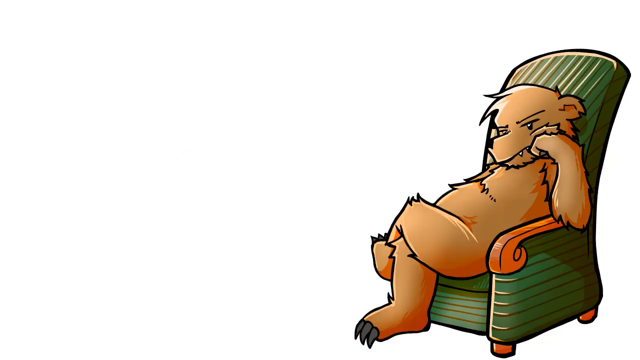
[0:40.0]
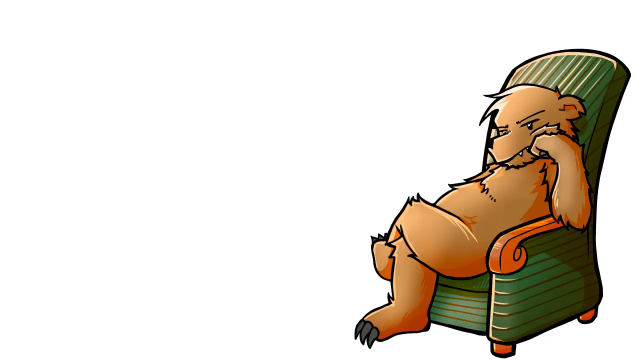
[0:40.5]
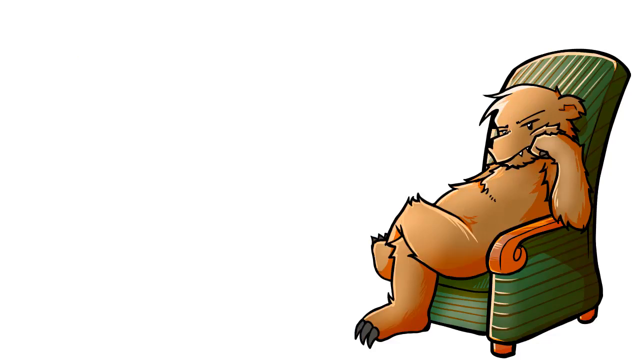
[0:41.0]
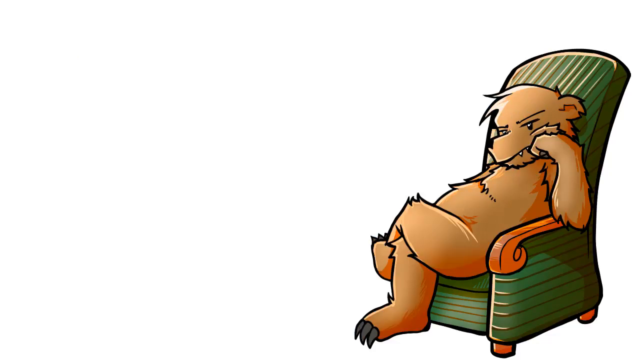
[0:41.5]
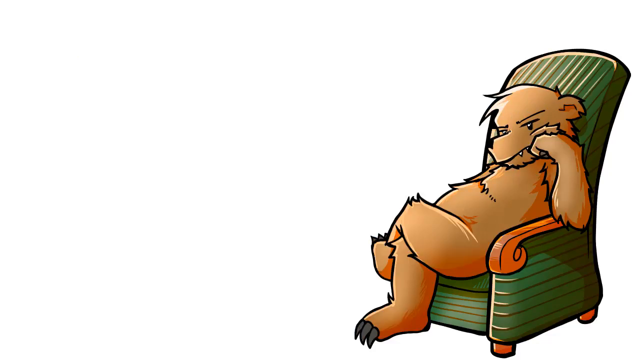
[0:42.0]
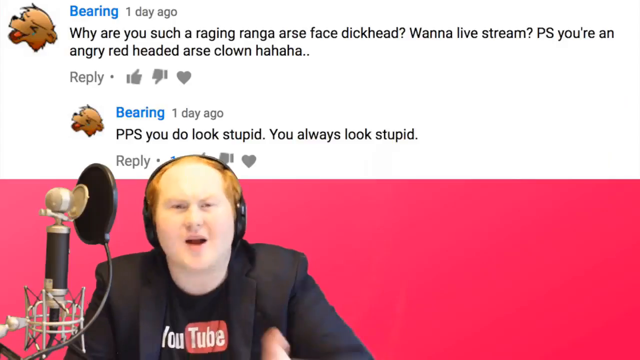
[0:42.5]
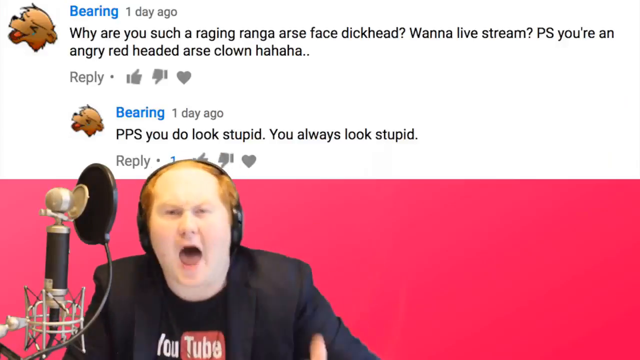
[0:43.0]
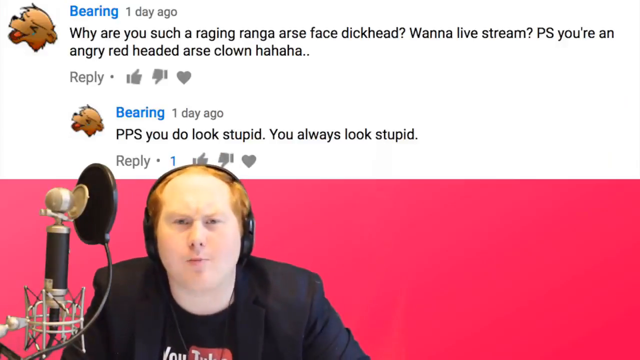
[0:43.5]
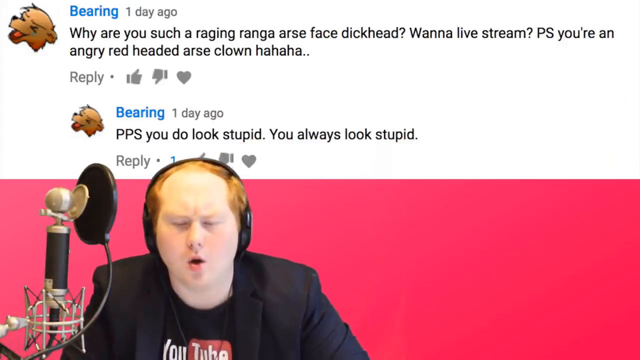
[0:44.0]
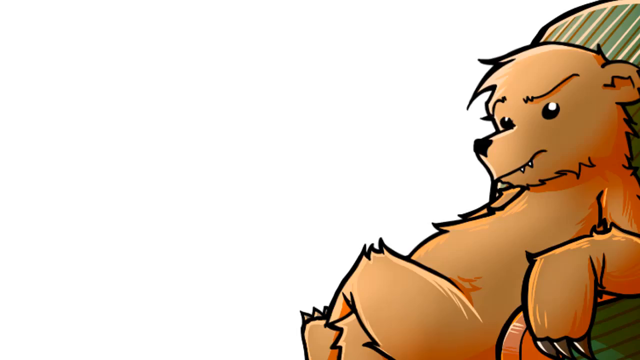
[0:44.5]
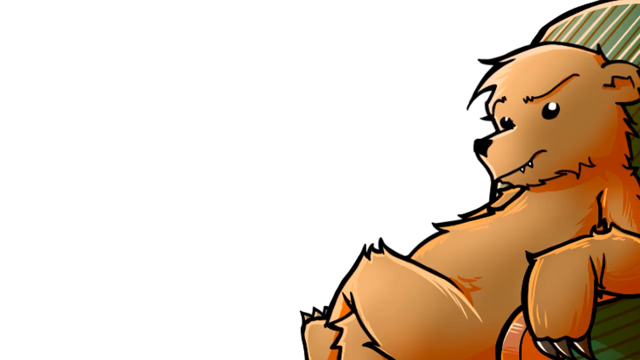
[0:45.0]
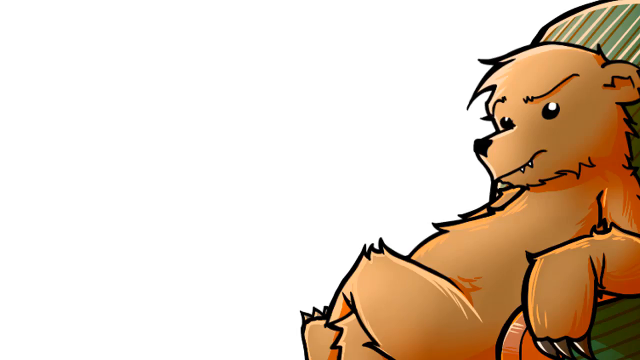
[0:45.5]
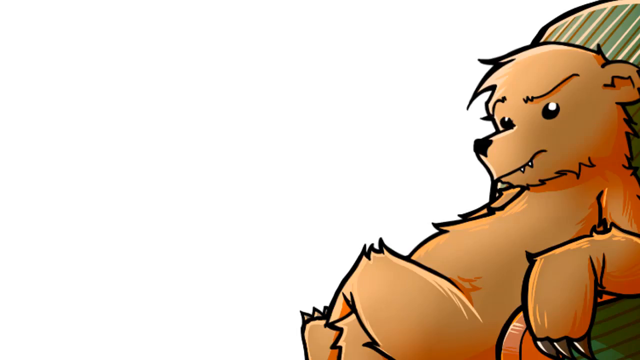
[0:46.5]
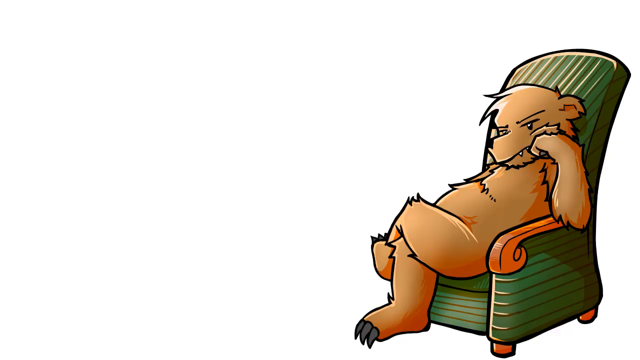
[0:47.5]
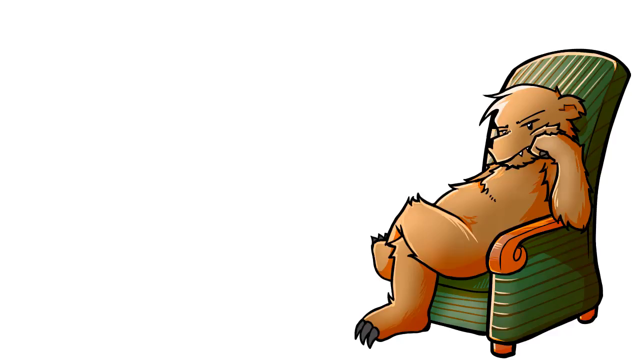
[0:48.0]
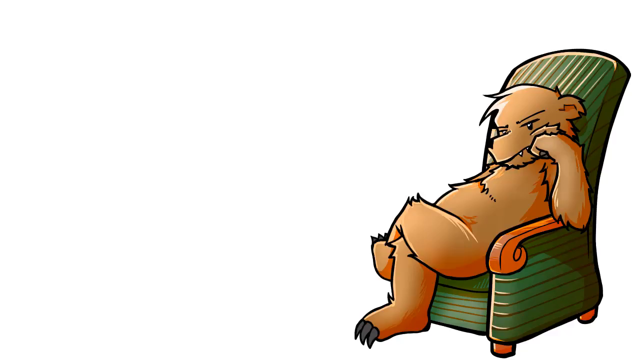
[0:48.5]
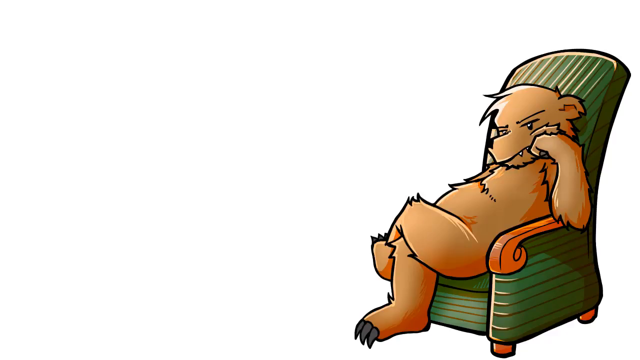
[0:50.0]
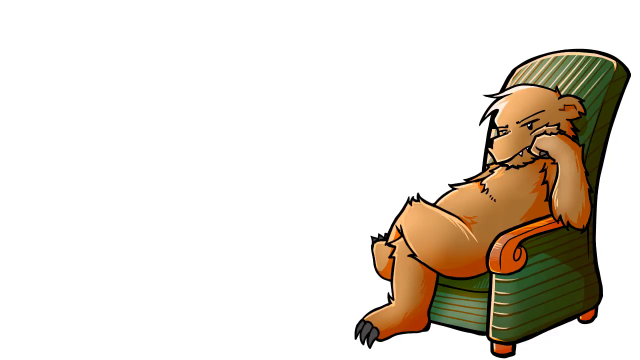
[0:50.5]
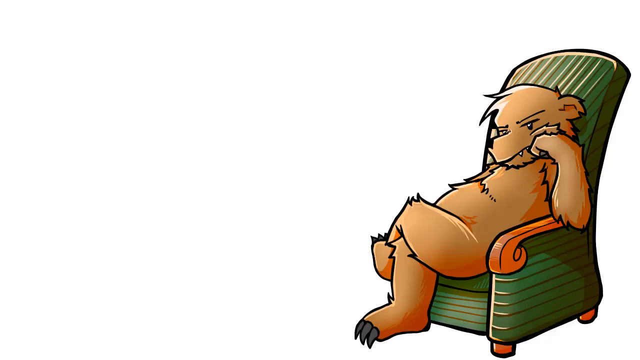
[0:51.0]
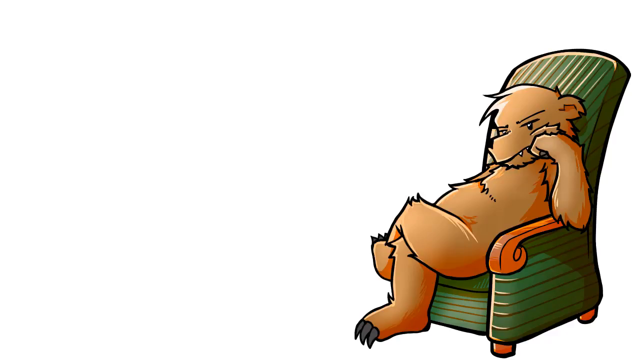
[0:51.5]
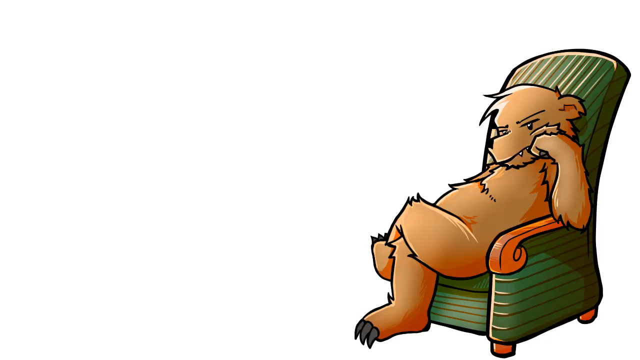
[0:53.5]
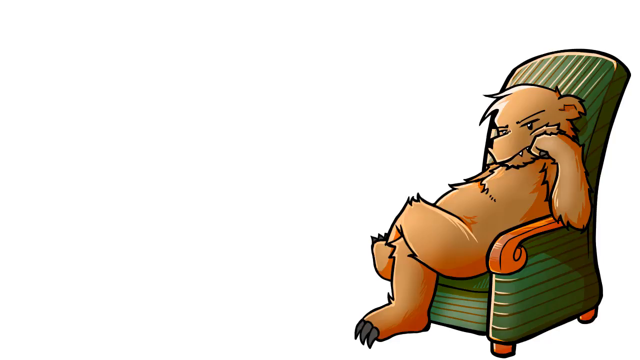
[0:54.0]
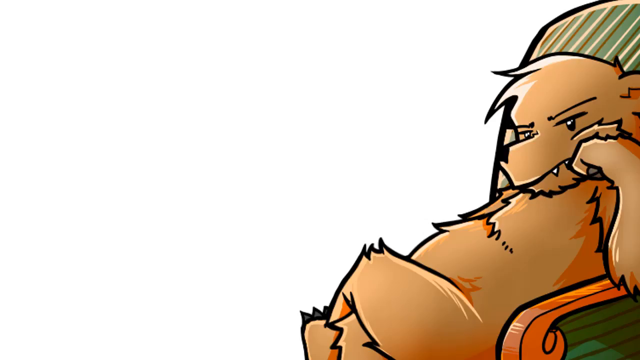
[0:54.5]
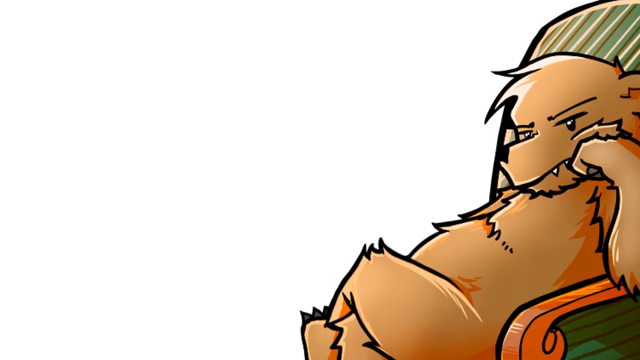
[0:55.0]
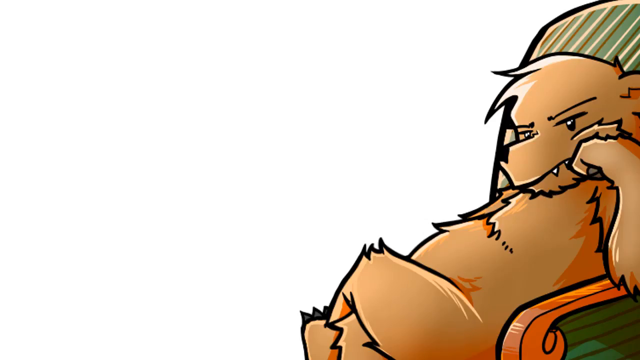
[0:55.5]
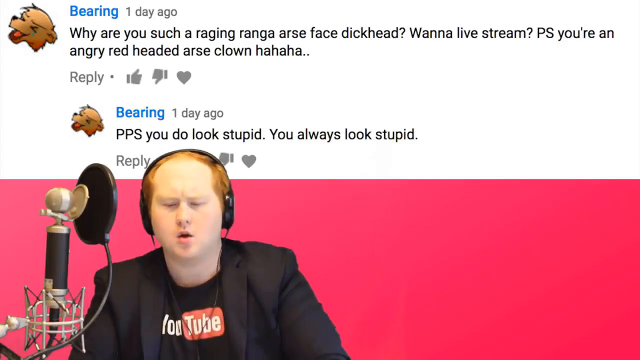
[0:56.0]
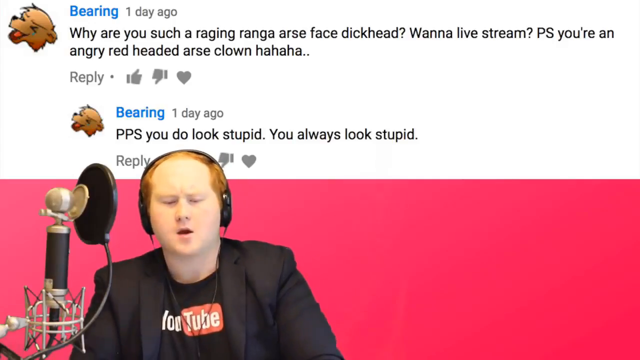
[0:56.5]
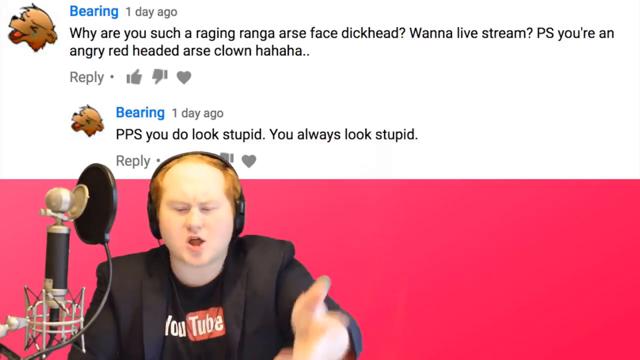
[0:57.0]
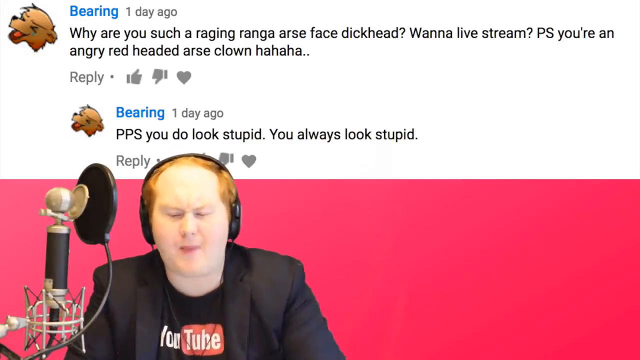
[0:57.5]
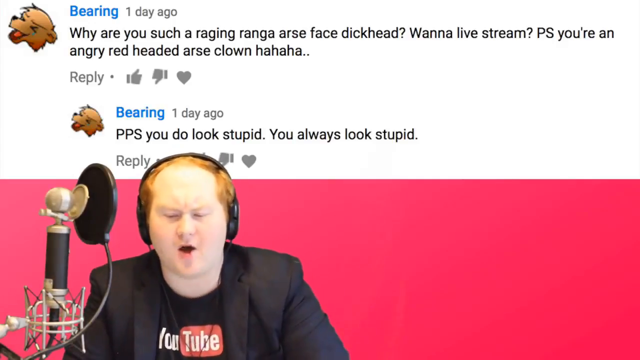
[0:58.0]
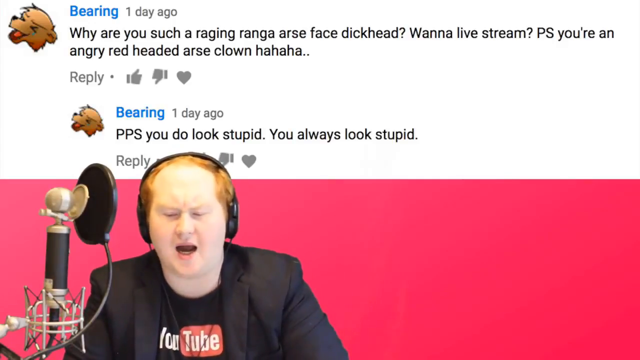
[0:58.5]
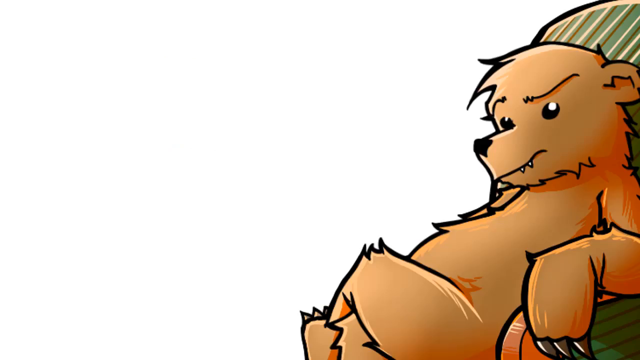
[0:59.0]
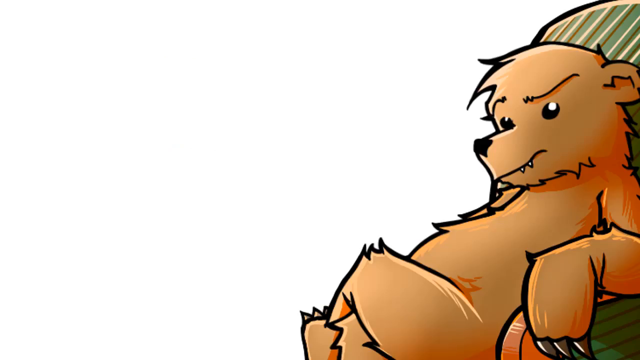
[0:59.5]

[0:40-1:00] The speaker talks directly into the camera. He definitely appears upset, with furrowed eyebrows, and his expressions show he is speaking loudly. Looking right into the camera, he raises his left hand and gesticulates toward it, directed at the person who left the comments. A fairly large microphone is to his right, with a black disc-like microphone face and a black cord extending downward from the disc; black and silver metal components make up the stand and the pivoting head that allows the microphone's angle to be adjusted. The background is consistent: a pink bar of color along the bottom and a white text area above it presenting the rude, critical comments from a person going by the name "Bearing". The video periodically cuts to the cartoon bear in the recliner, whose smile is gone. It alternates between two images: the bear looking a little serious with an eyebrow raised, and the bear looking frustrated, sitting back and resting its face on its left paw supported by the recliner armrest. There are also periodic close-ups of the cartoon bear's face.